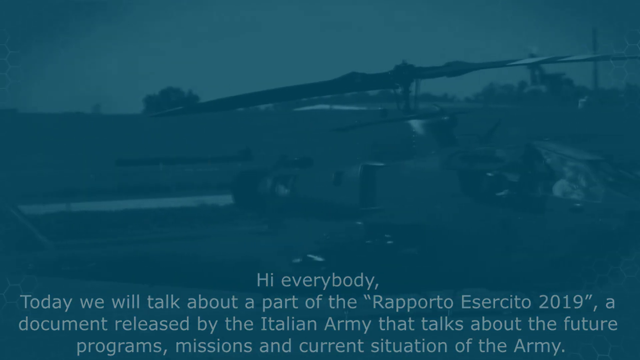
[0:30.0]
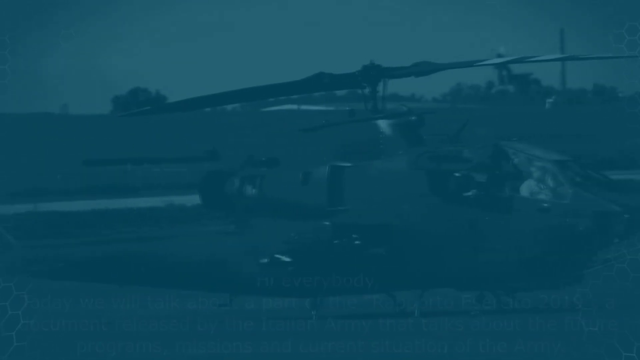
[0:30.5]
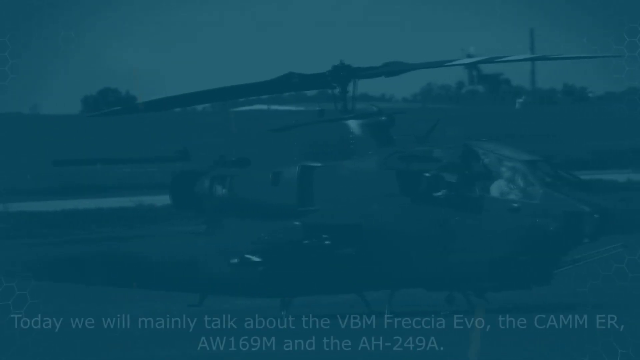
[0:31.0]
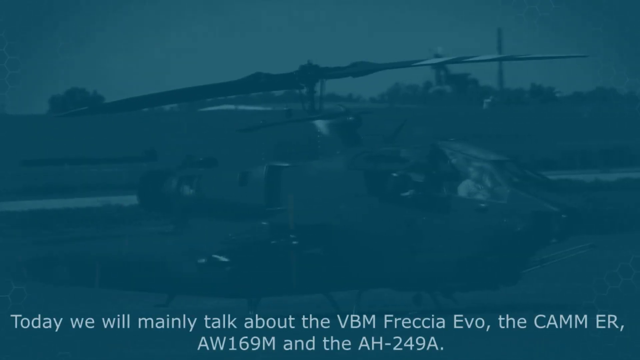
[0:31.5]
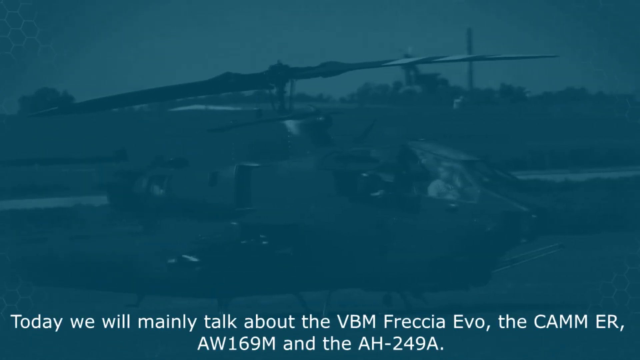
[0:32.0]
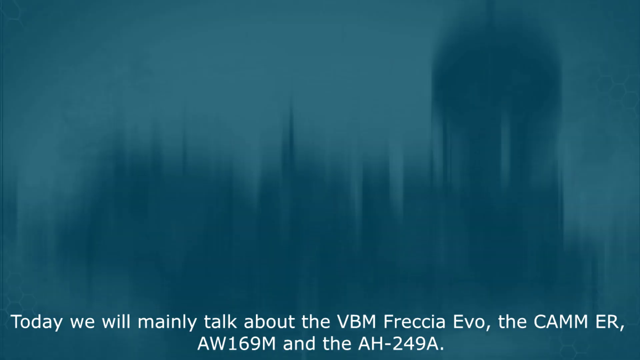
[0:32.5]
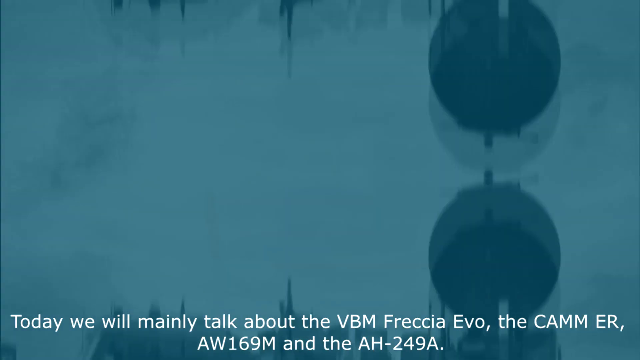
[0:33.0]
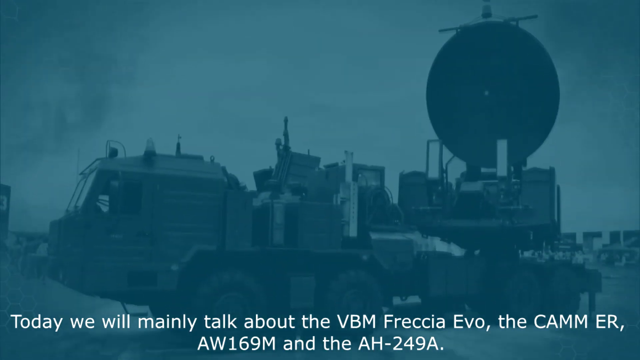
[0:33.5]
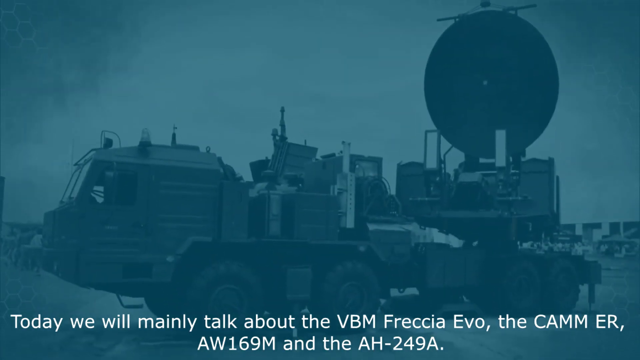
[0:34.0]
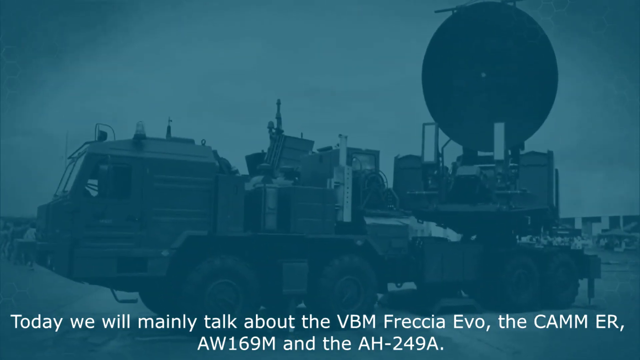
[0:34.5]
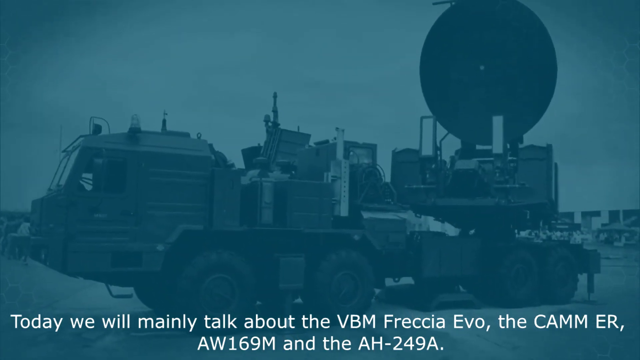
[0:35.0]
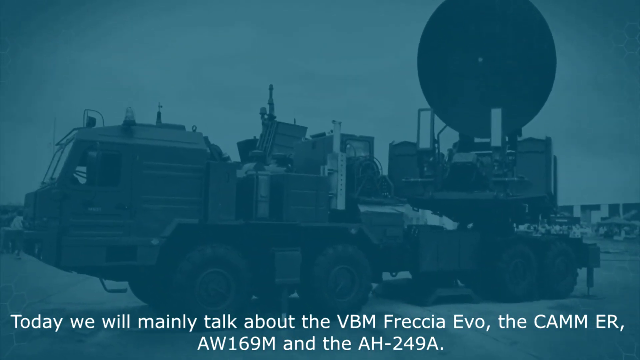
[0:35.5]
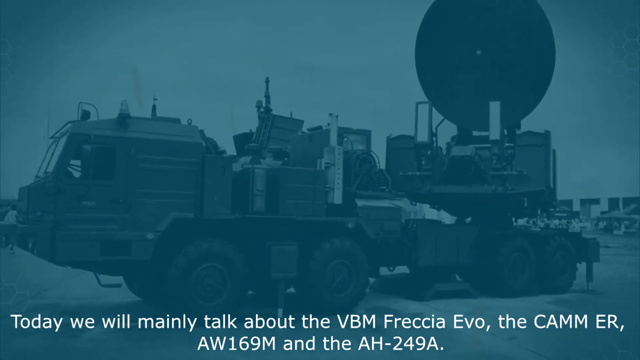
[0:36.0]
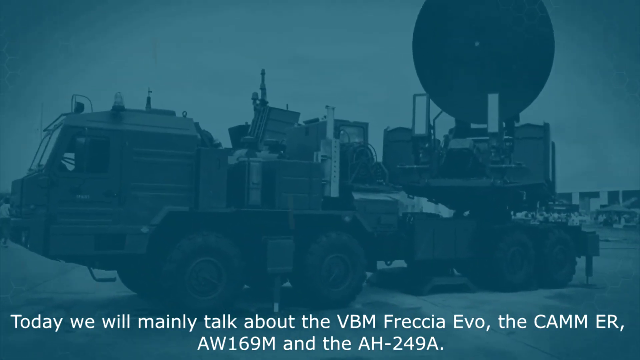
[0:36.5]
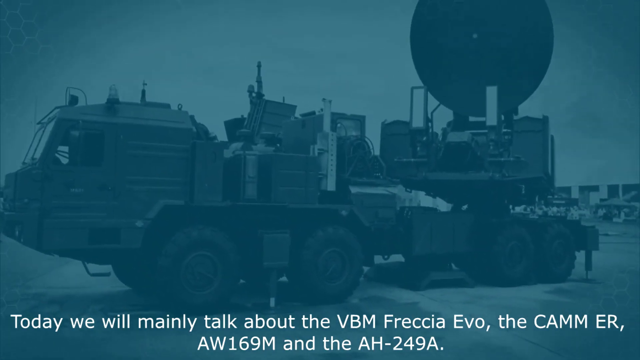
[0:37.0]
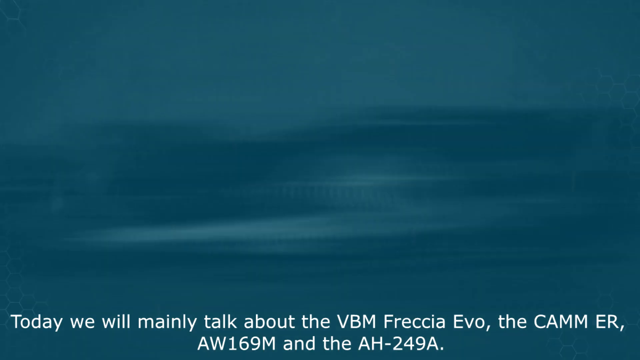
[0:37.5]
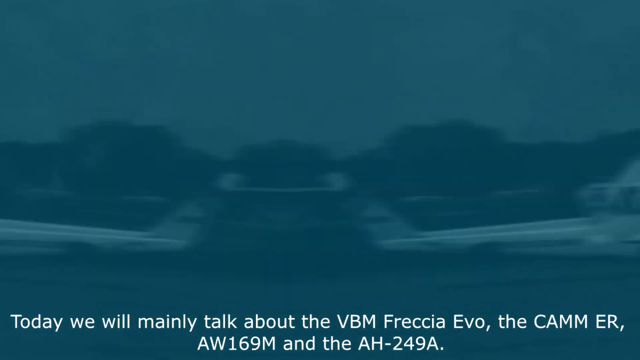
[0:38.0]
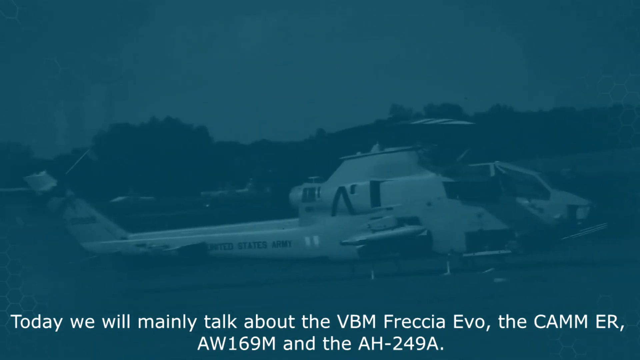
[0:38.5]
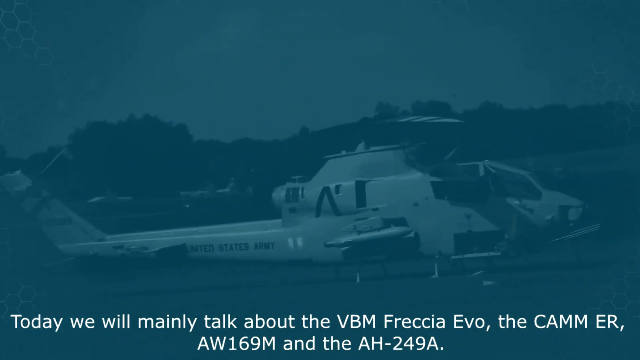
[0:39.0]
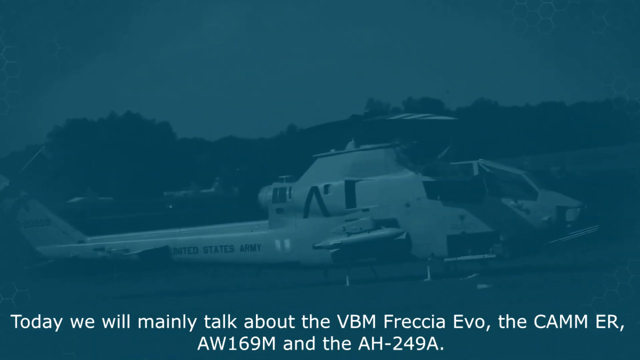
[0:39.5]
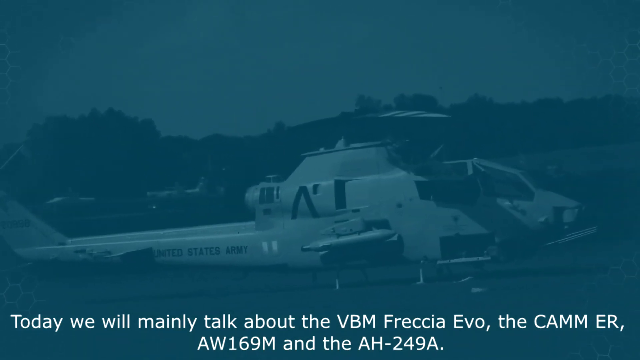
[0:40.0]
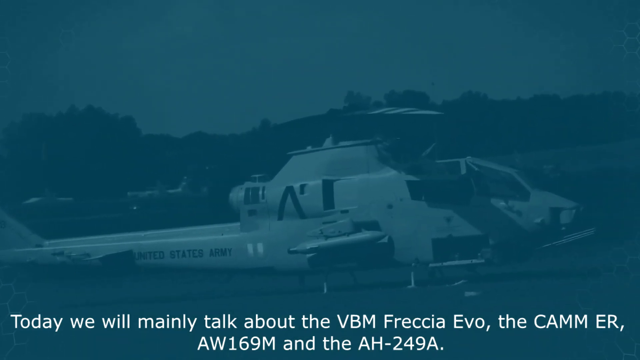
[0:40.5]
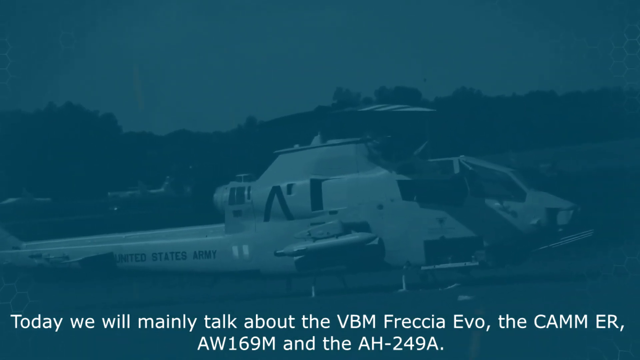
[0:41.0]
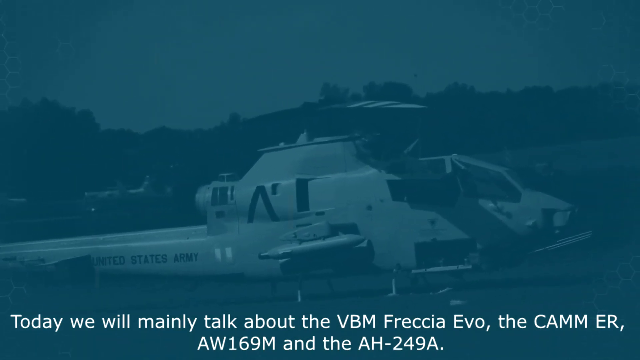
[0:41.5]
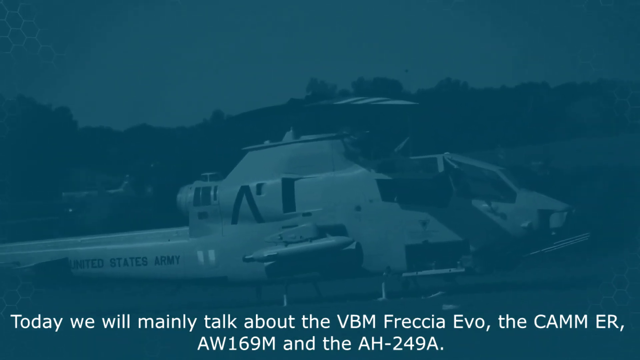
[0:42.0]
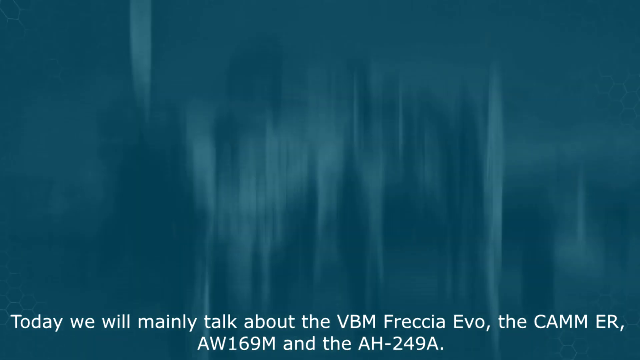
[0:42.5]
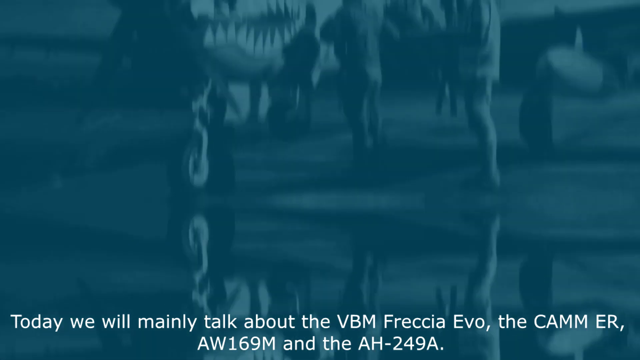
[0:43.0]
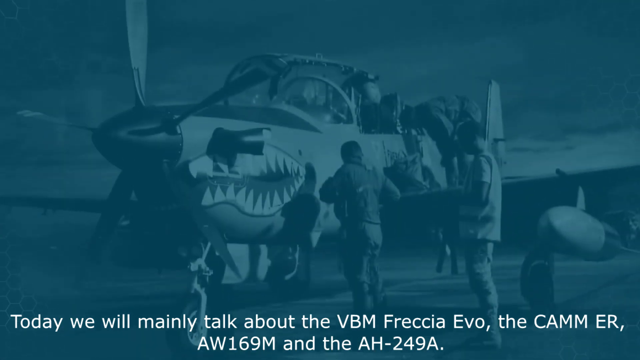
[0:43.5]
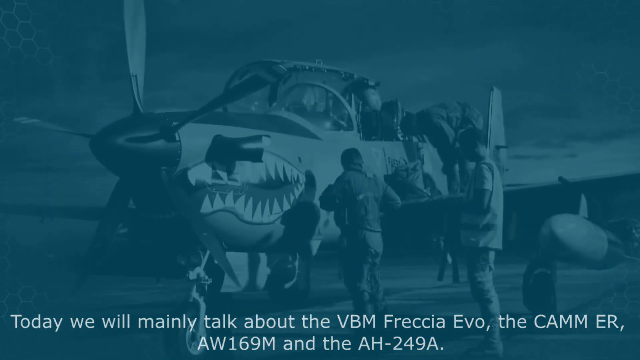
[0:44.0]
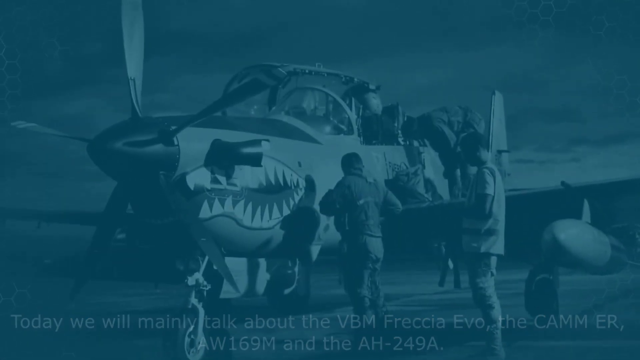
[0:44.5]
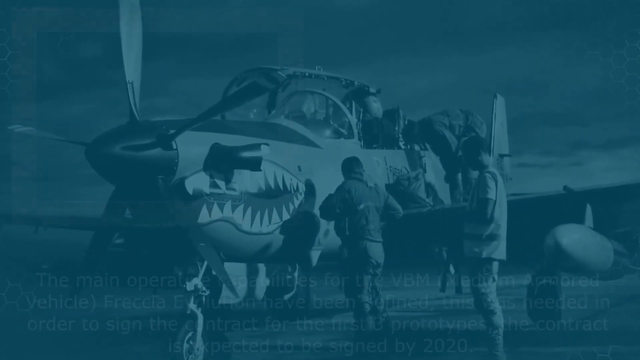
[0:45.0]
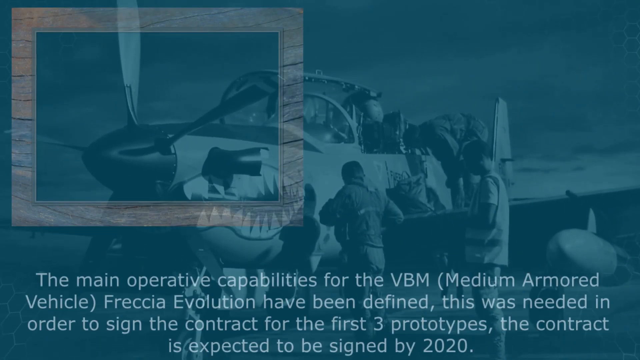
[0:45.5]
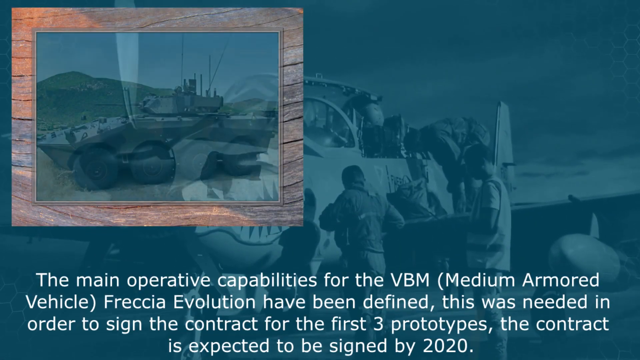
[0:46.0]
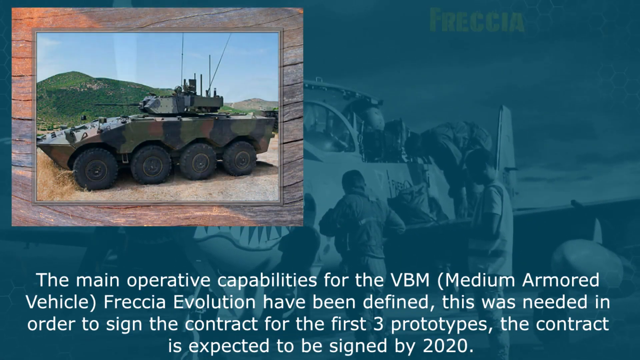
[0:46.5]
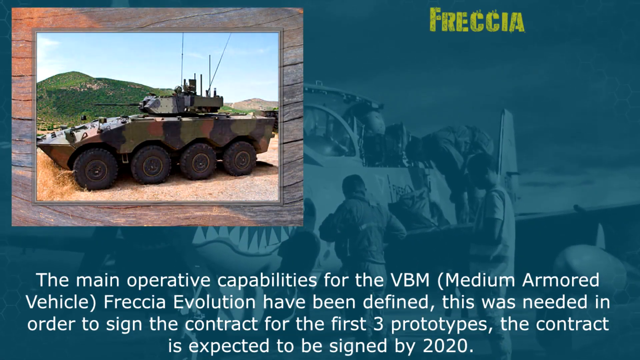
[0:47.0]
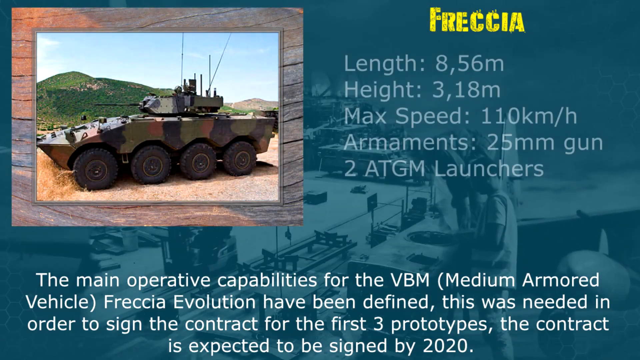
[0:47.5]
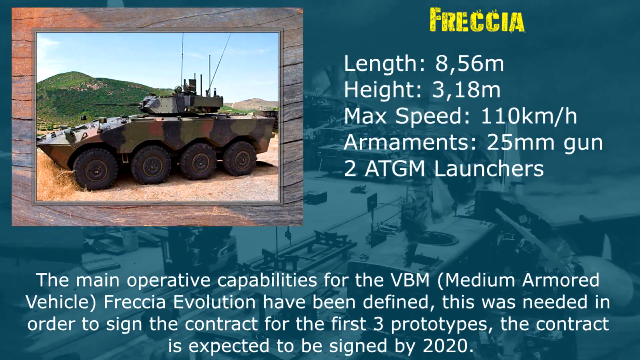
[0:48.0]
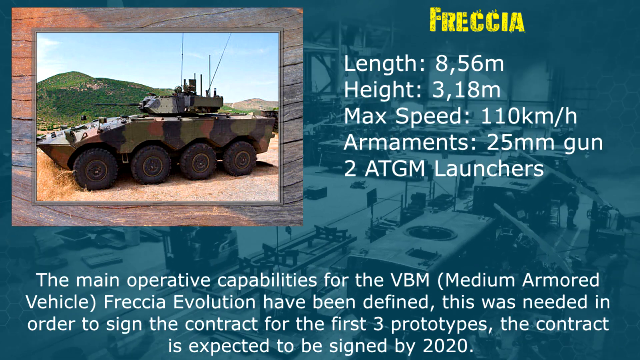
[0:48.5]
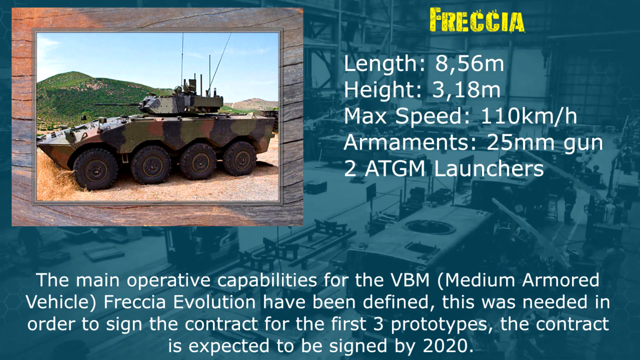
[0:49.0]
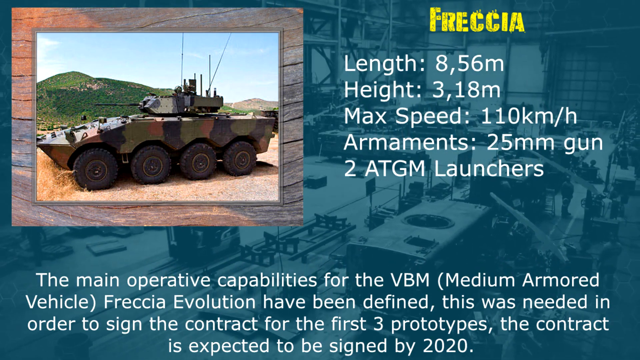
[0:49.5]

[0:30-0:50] What looks to be army equipment and personnel appear in the background, and the screen is kind of hazy blue. White words pop up at the bottom of the screen. The background changes from different types of tanks to what look like different types of army airplanes. On one page, an army tank is shown in a square, with "Freccia" in the background and writing at the bottom. The page lists length, height, max speed and armaments, with information beside each. The background then appears to change to a warehouse or some sort of building with a lot of mechanics.